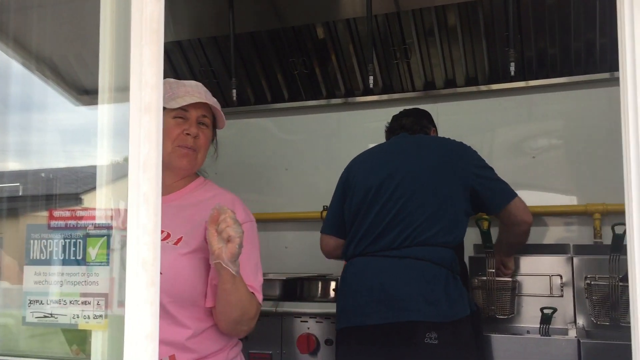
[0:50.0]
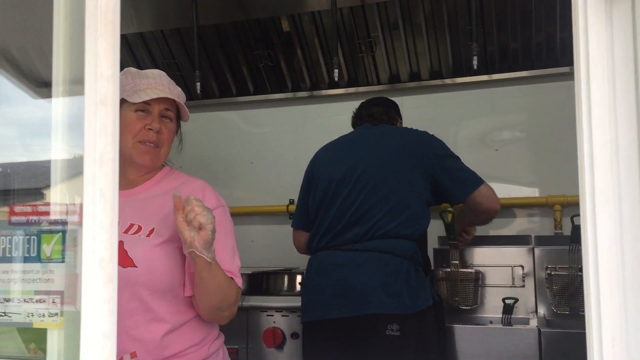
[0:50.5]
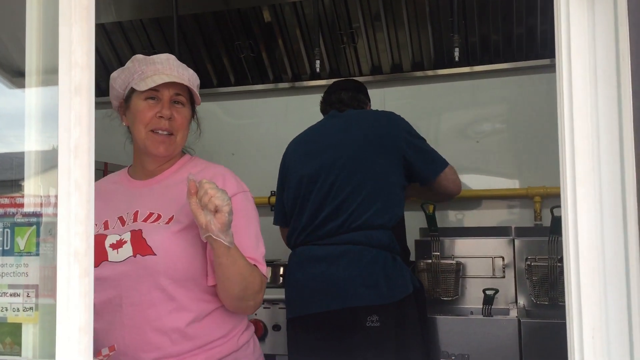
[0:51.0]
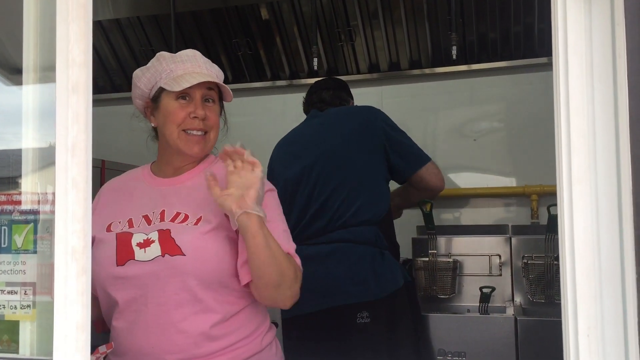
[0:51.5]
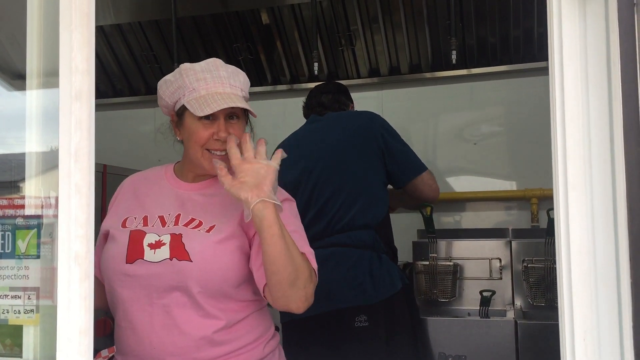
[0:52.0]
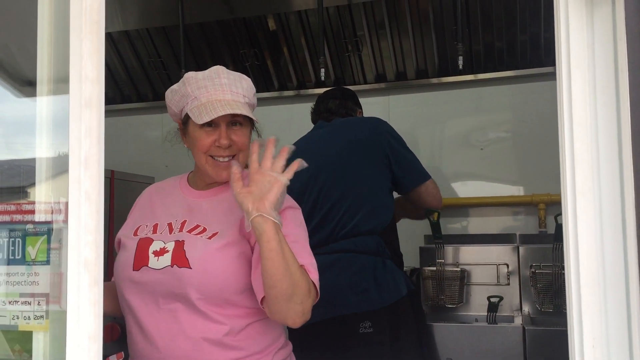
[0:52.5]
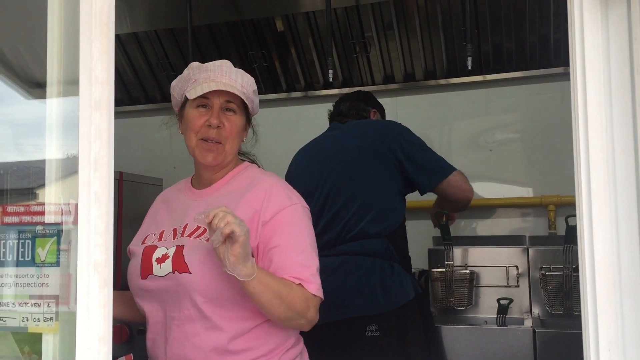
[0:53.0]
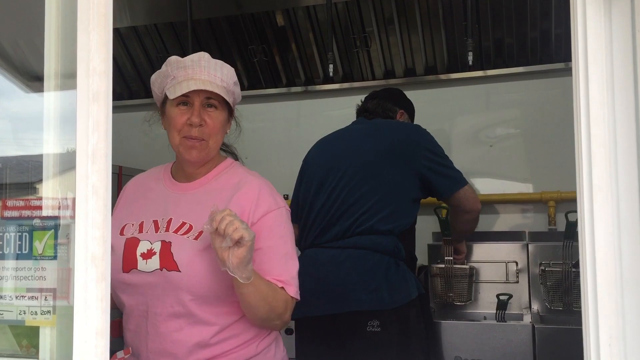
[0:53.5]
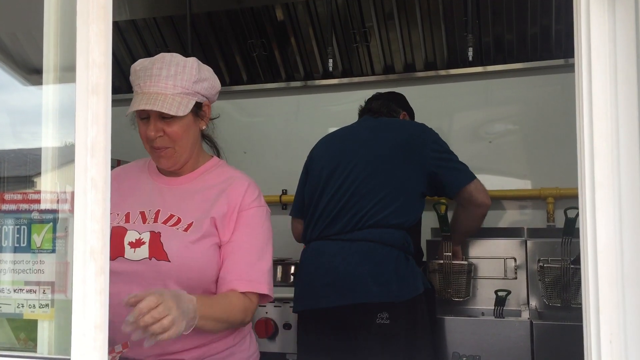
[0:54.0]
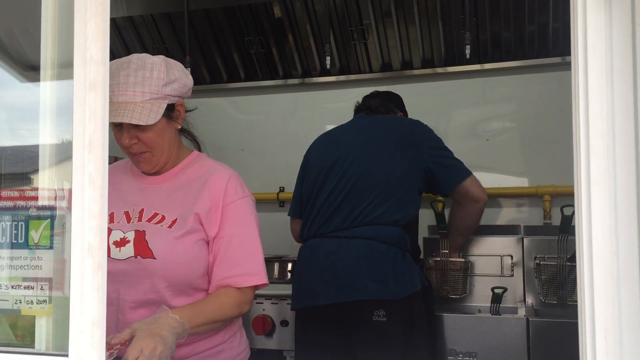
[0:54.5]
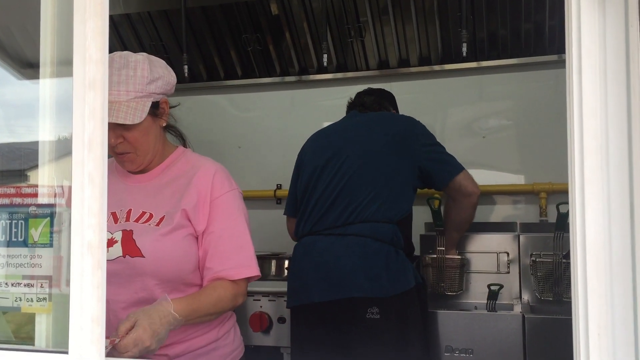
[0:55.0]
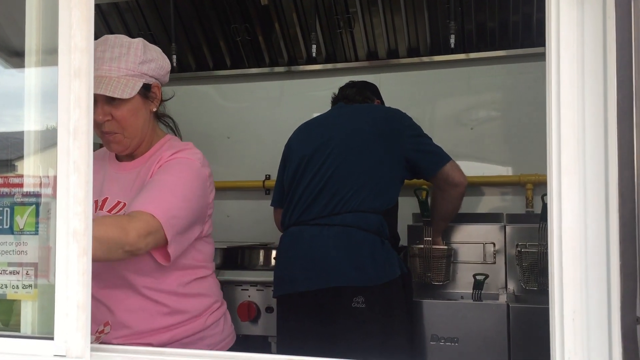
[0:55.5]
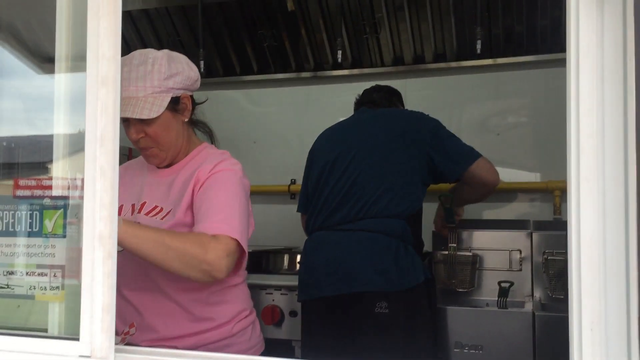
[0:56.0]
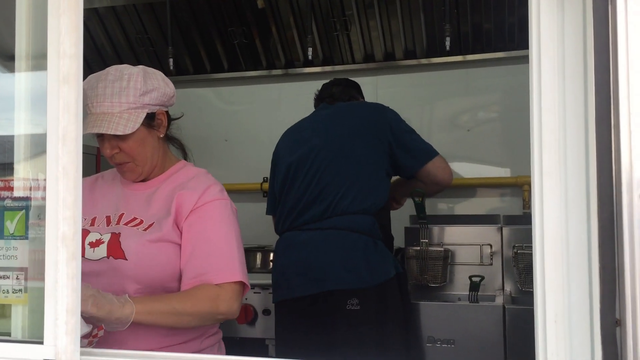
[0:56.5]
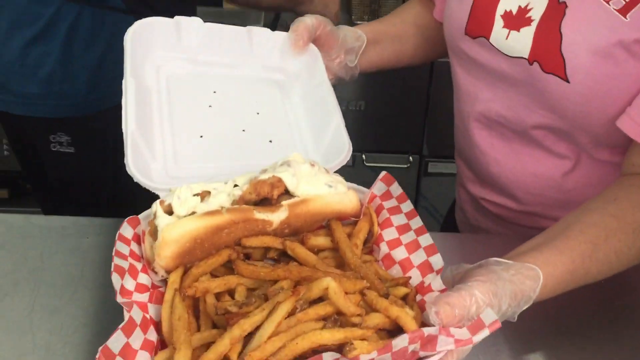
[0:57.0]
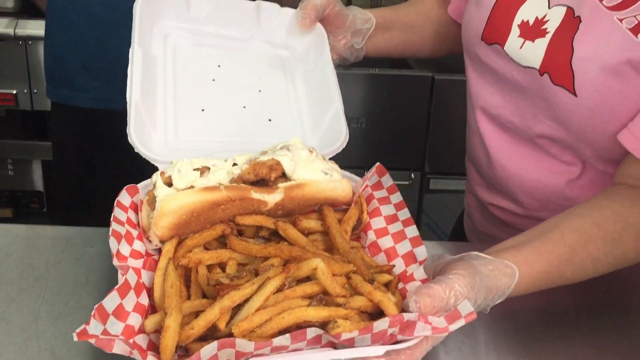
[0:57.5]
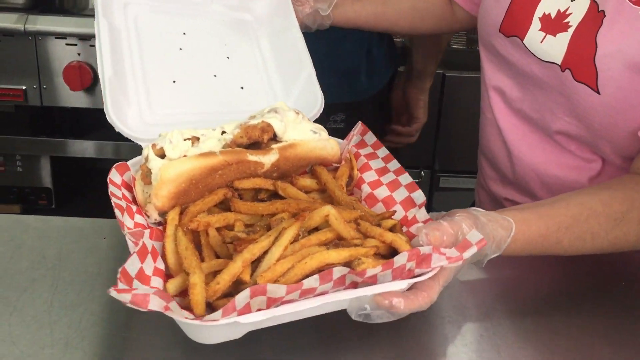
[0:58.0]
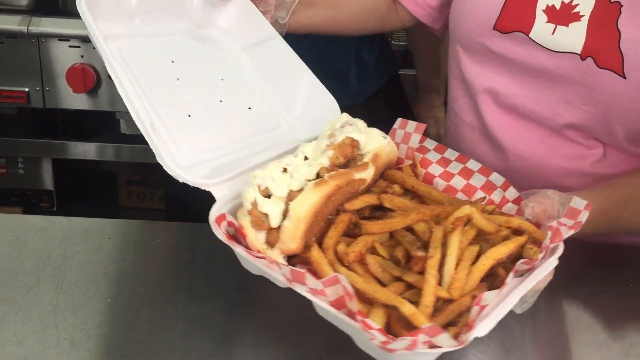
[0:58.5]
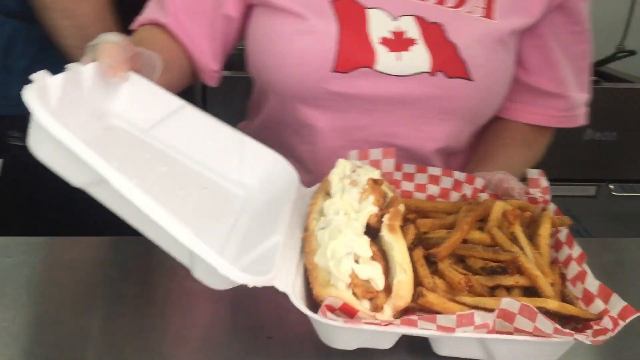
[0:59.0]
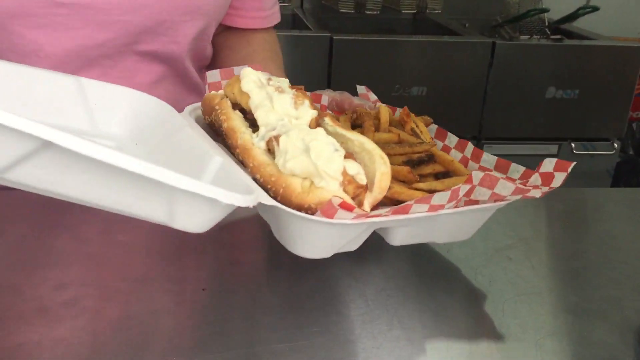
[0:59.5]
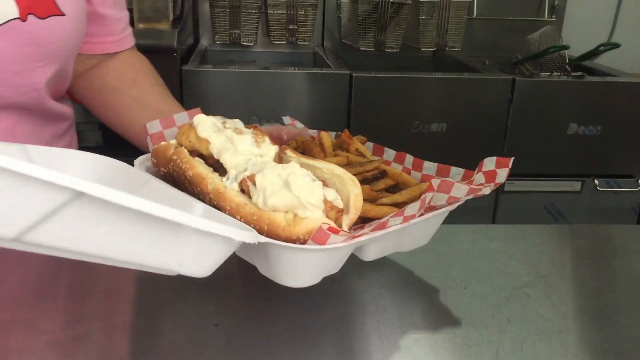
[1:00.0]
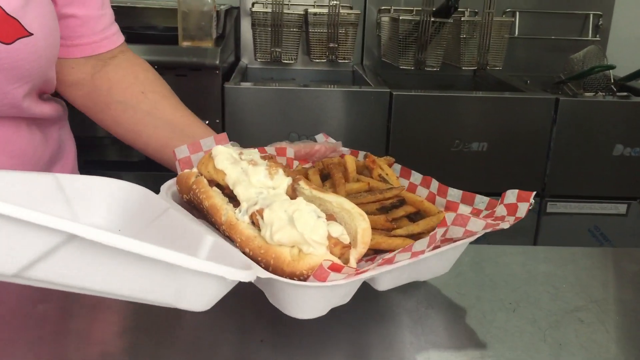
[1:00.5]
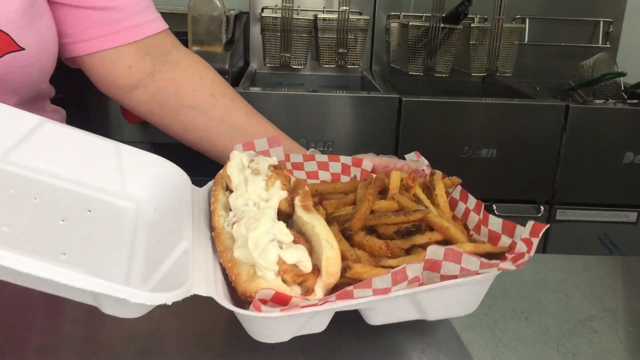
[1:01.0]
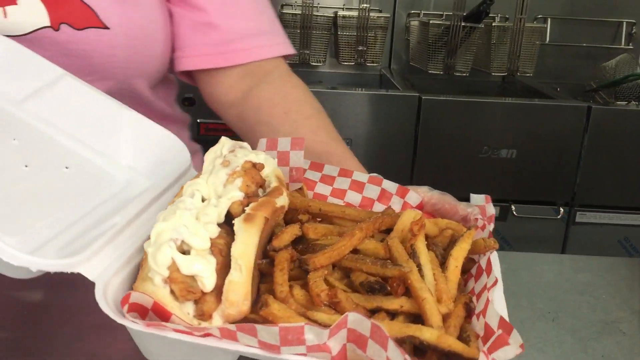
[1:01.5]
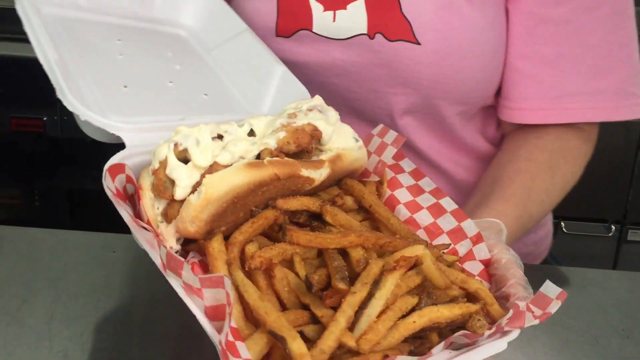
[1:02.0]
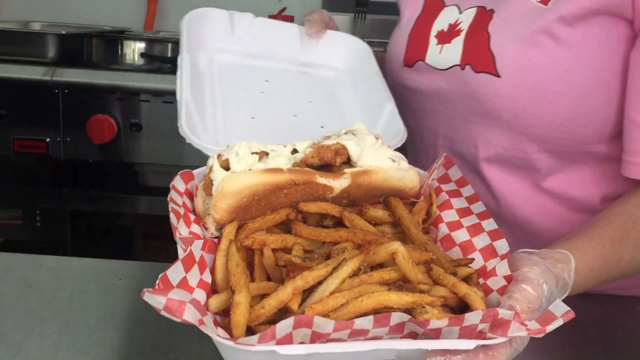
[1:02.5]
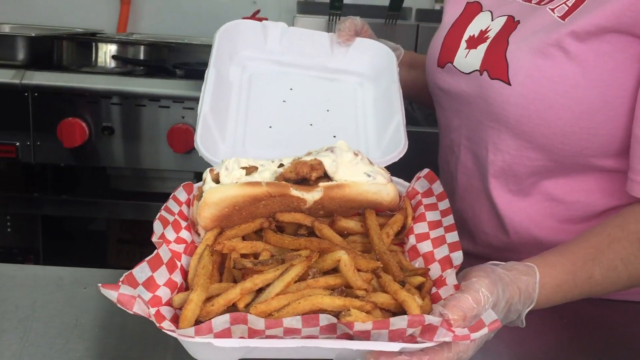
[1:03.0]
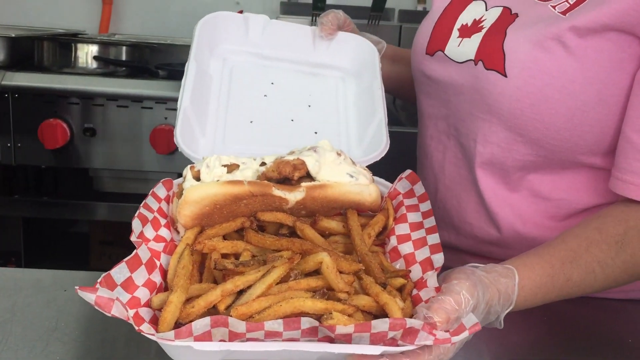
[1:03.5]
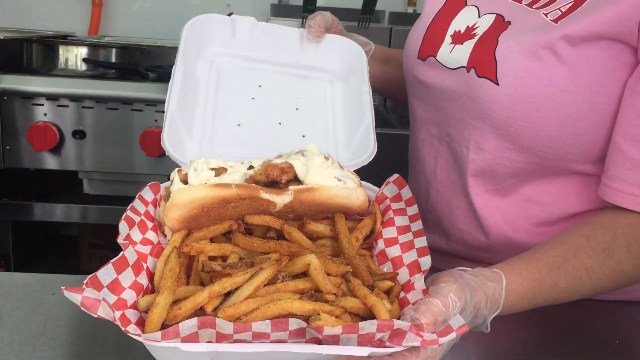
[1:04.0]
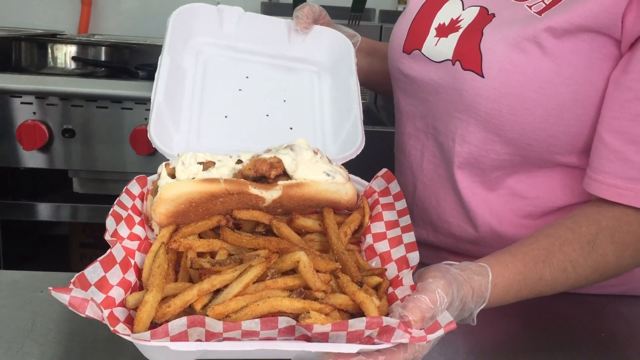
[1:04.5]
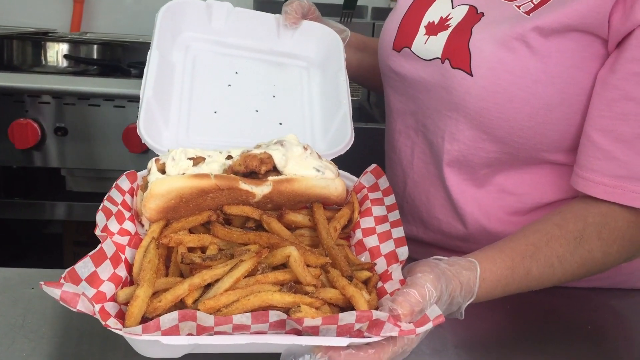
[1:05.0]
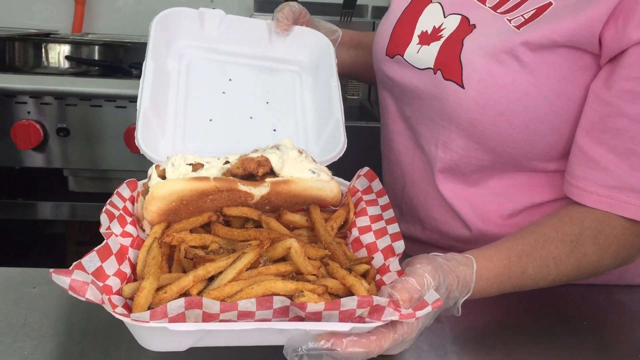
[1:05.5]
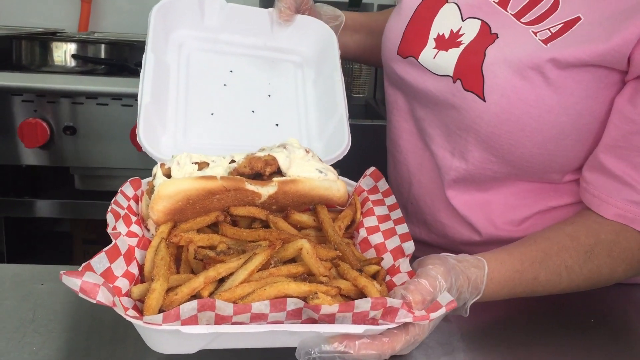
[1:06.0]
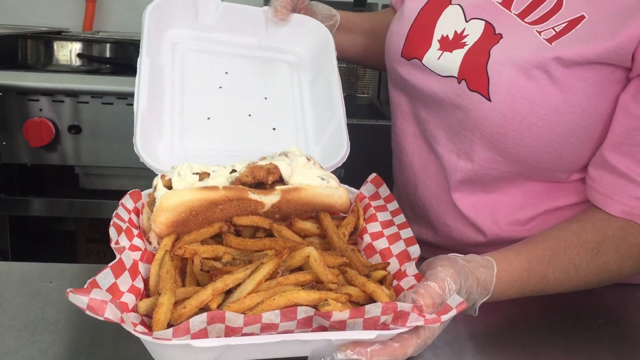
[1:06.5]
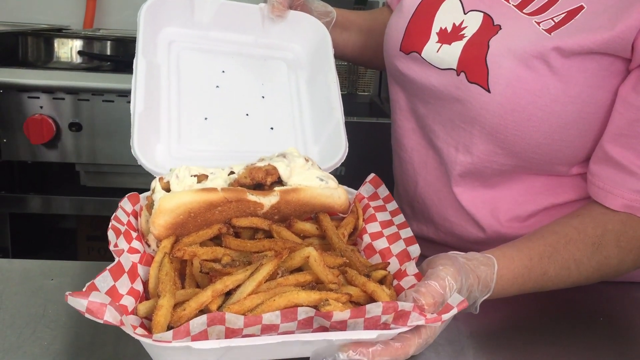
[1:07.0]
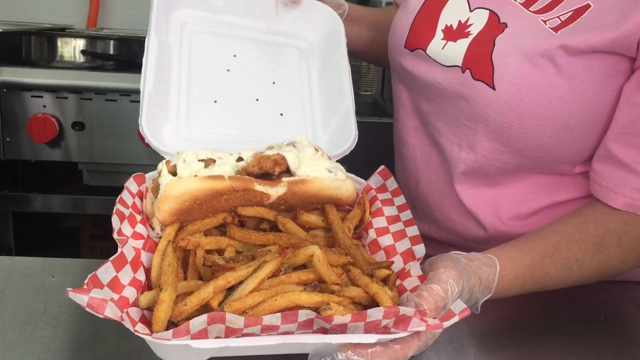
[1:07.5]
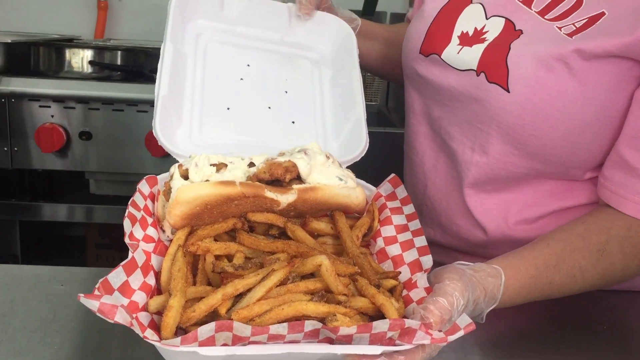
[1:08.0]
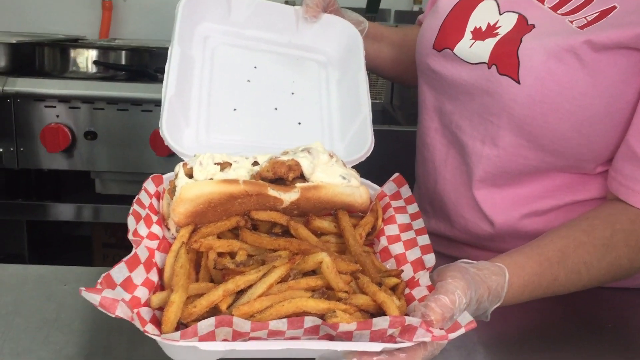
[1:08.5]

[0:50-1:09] The trailer for Joyful Lynne's Kitchen has its name written in one font. The caravan has pictures attached to it, including salad in a bowl with white sauce on top, round, very brown buns, and sandwiches. There is a flag on the right side of the frame, and a window that is wide open. Inside, two people move around the kitchen. A woman wearing a pink T-shirt and a cap waves to the people outside. The camera moves toward the window, showing a man wearing a navy blue T-shirt, a black apron and a black cap, holding a very big silver container and seeming to mix things in it. The view moves to the outside of the van, where a menu written in red lists items such as cheddar bacon burger, bacon cheddar barbecue chicken, some pizza, and pretzel for $7. The caravan is attached to a white 4x4 car and is parked on a street; on the left side of the street there is a house and a car park with cars parked there. Back at the window, the woman, whose pink T-shirt has "Canada" written on it and a Canadian flag, talks to people outside and waves. A takeaway plate with hot dogs and chips is then shown. The camera zooms, showing the background of the kitchen with some towels inside.